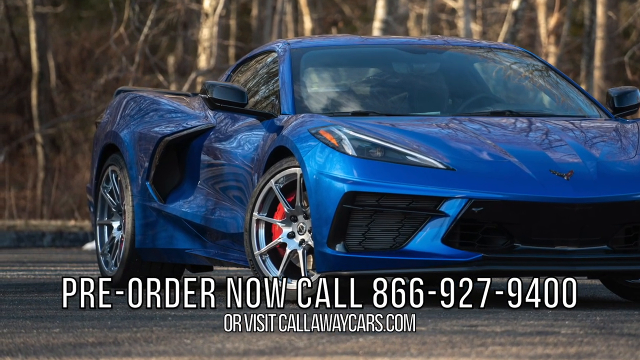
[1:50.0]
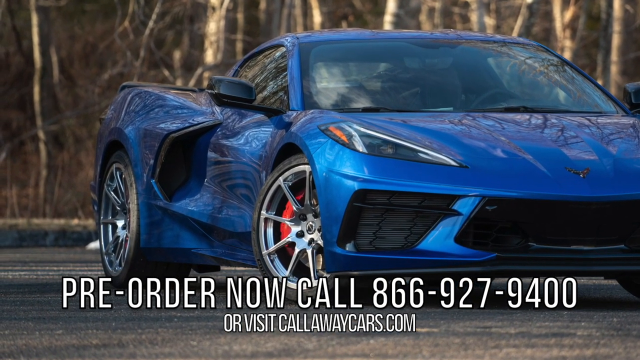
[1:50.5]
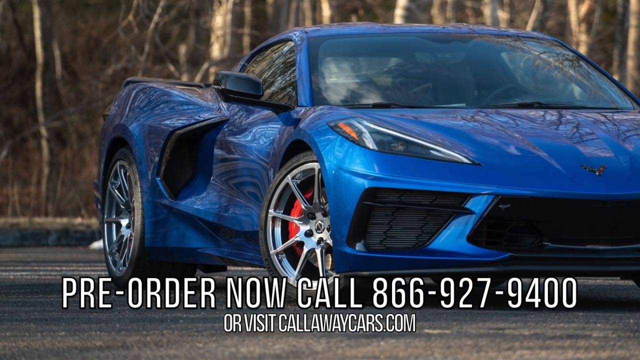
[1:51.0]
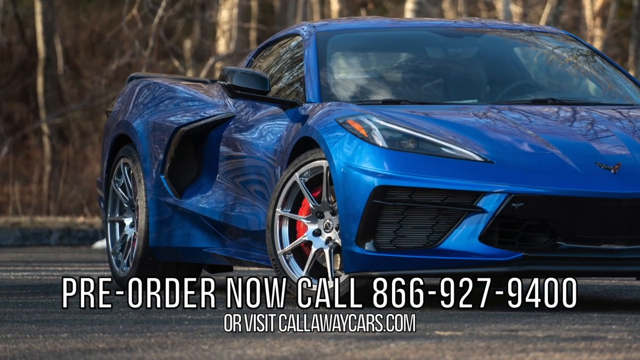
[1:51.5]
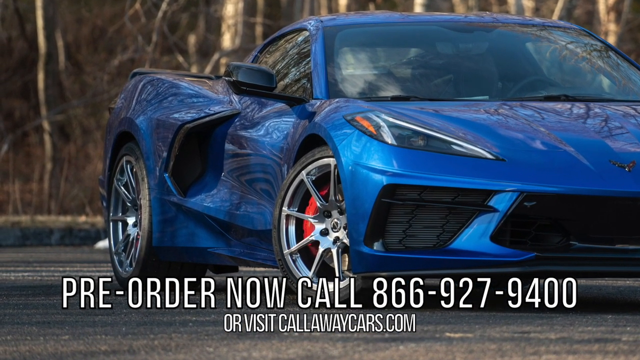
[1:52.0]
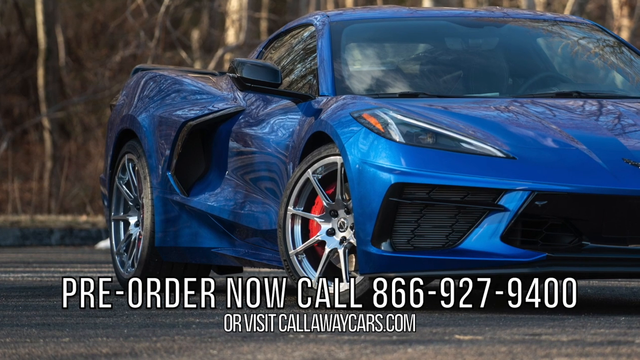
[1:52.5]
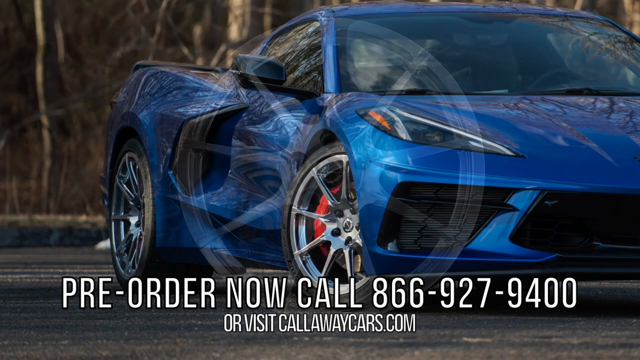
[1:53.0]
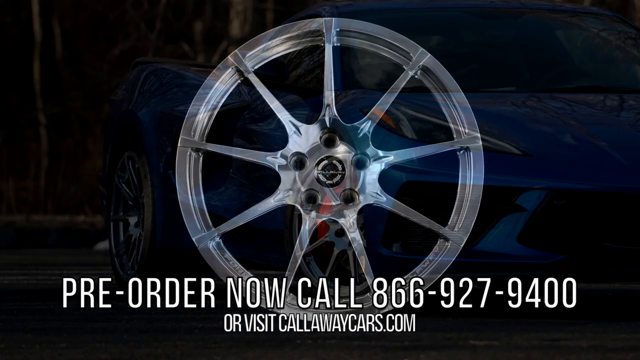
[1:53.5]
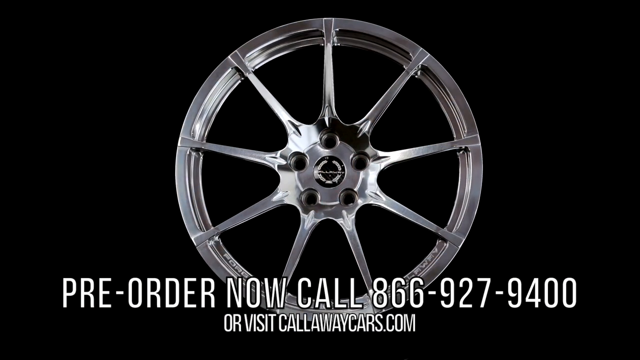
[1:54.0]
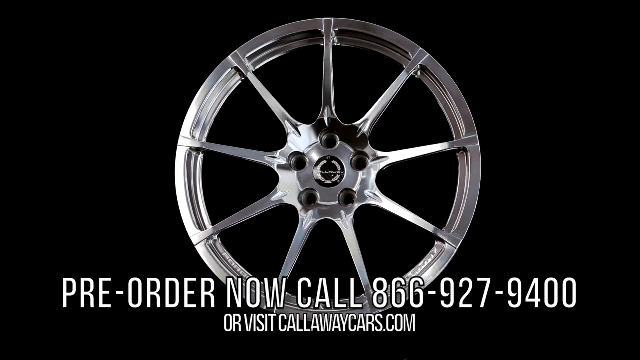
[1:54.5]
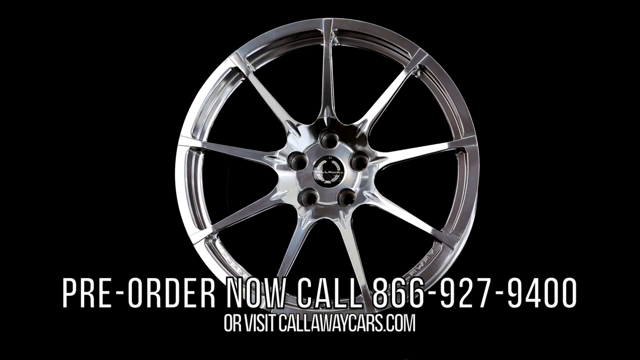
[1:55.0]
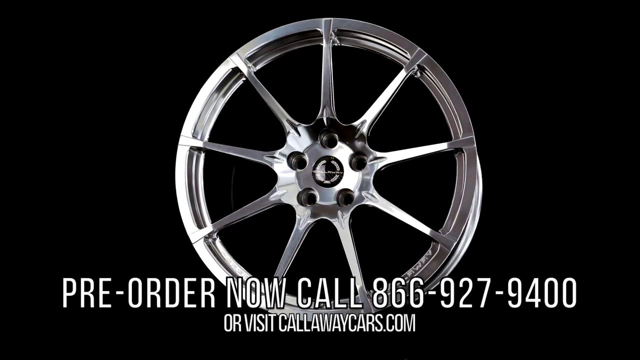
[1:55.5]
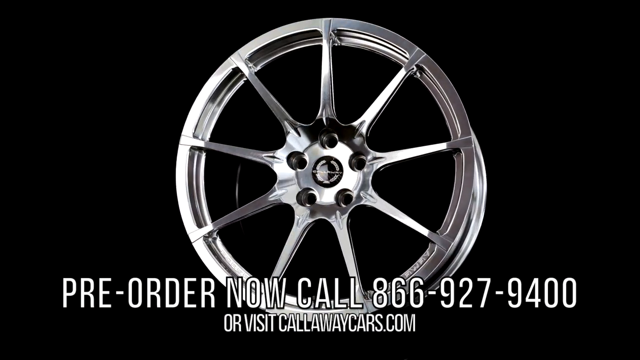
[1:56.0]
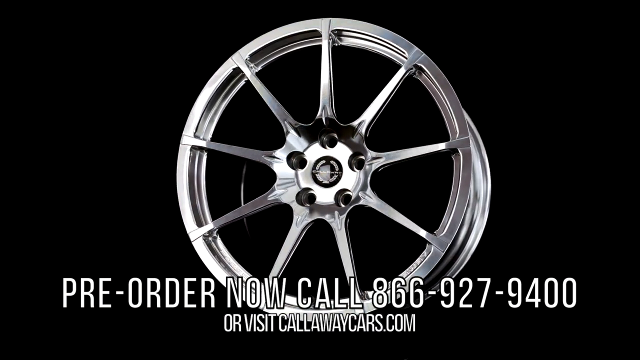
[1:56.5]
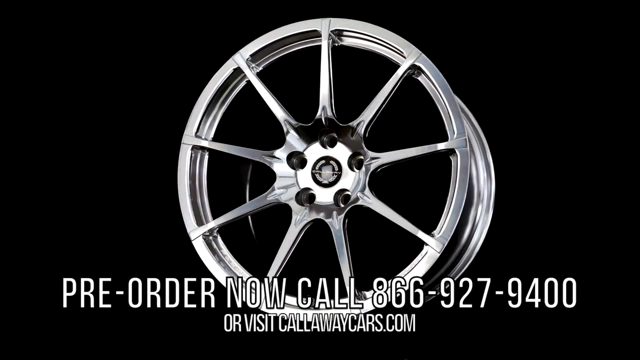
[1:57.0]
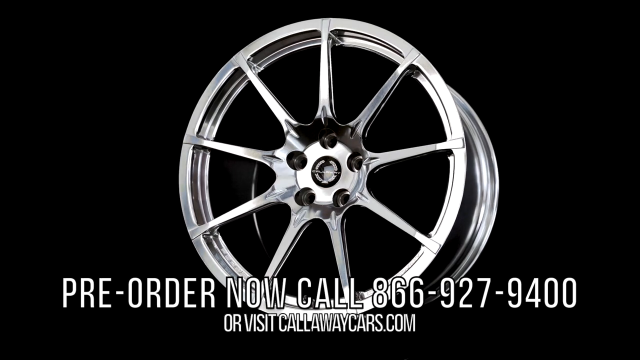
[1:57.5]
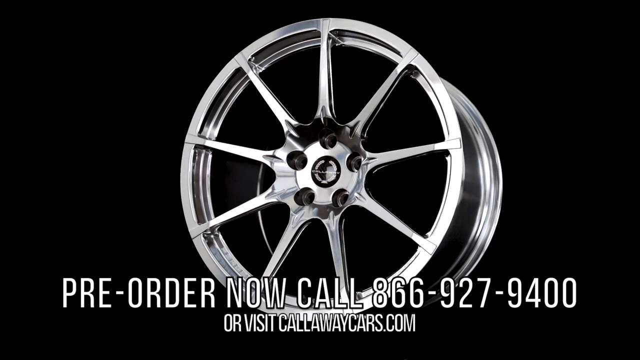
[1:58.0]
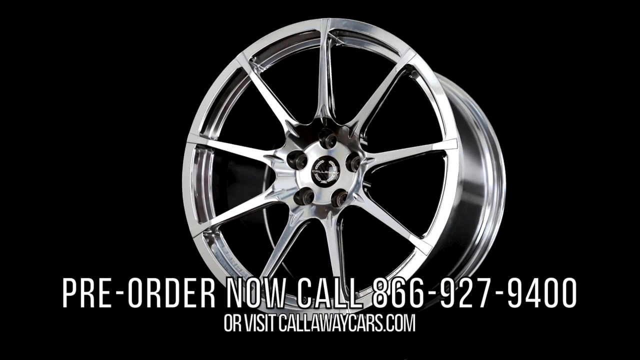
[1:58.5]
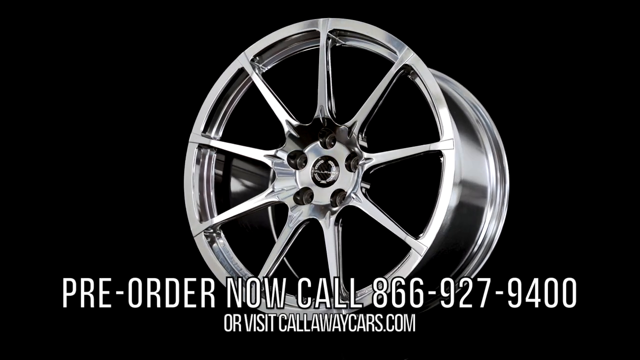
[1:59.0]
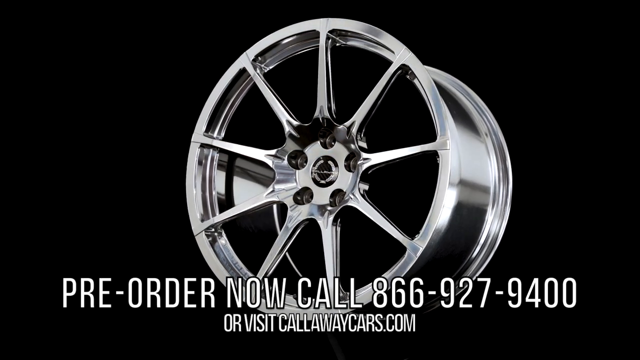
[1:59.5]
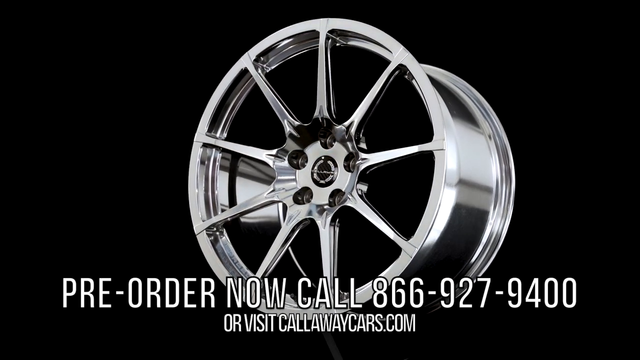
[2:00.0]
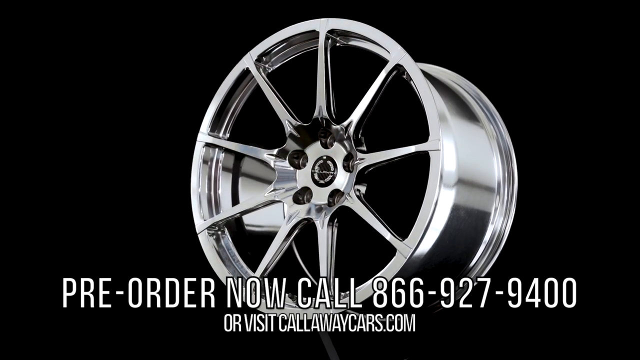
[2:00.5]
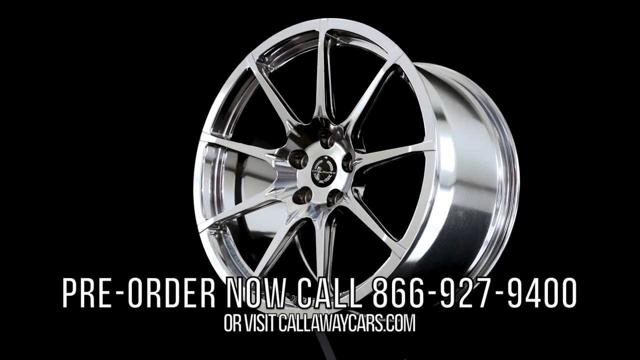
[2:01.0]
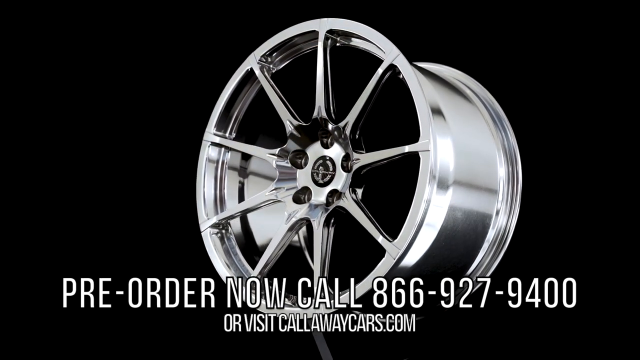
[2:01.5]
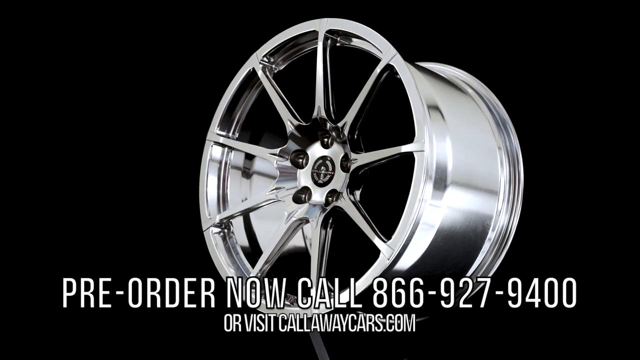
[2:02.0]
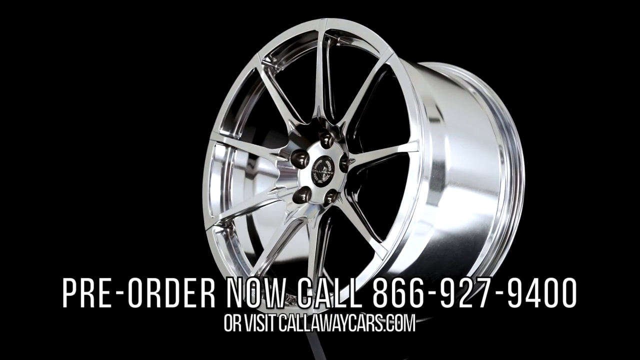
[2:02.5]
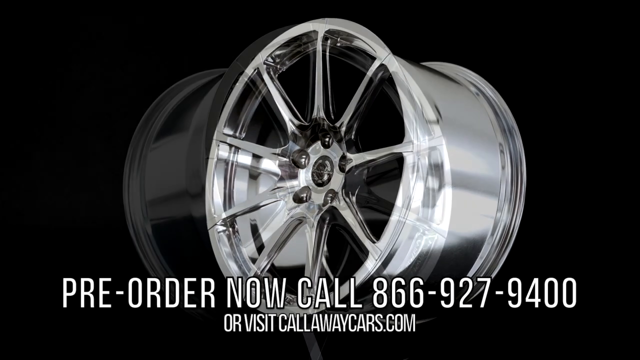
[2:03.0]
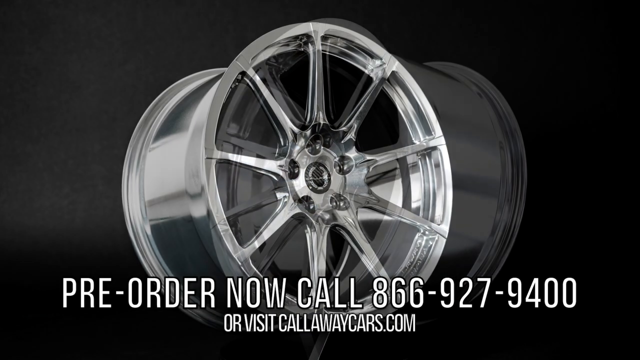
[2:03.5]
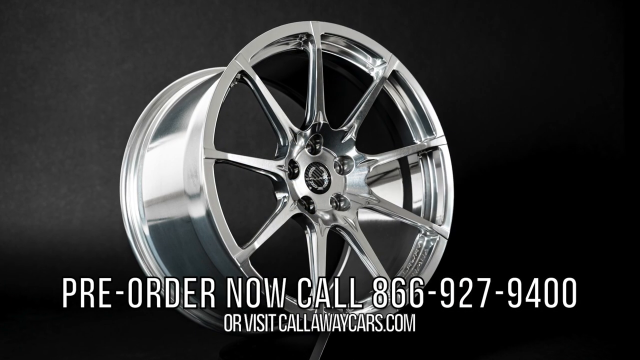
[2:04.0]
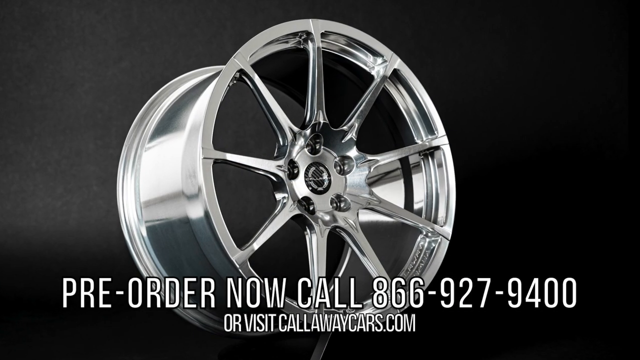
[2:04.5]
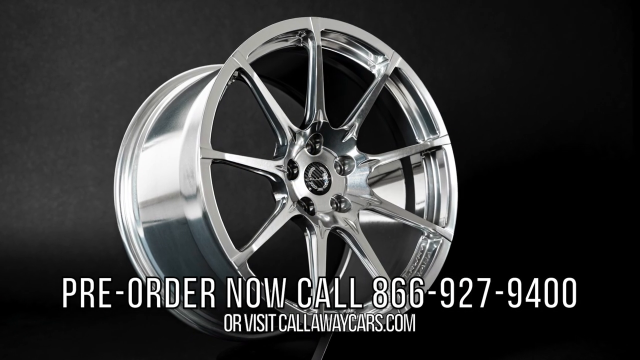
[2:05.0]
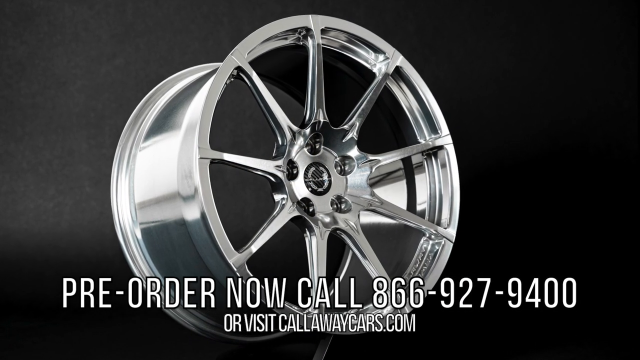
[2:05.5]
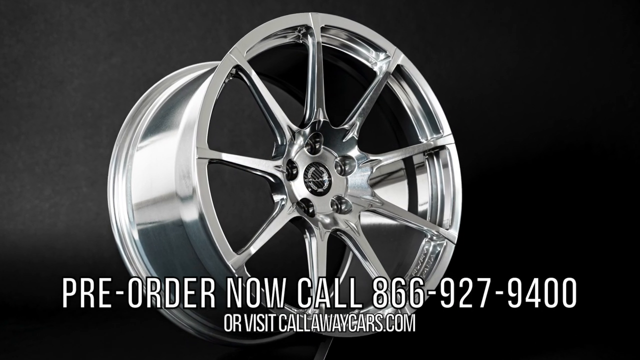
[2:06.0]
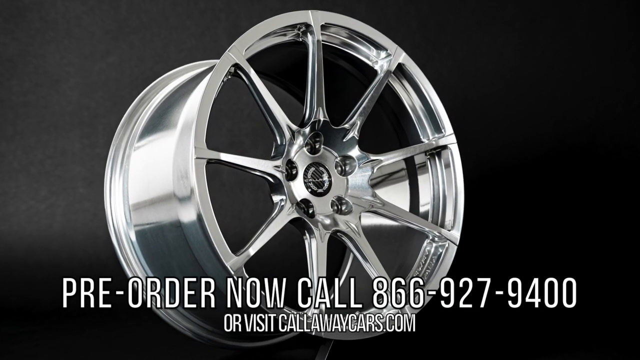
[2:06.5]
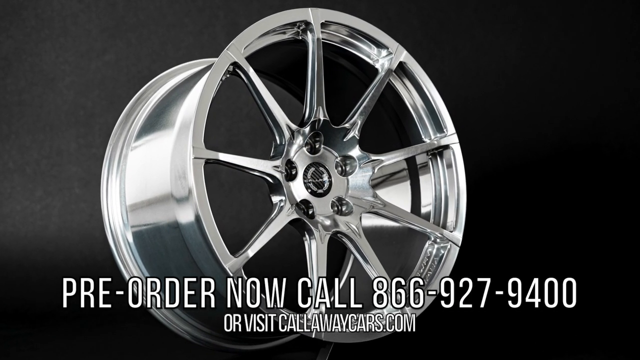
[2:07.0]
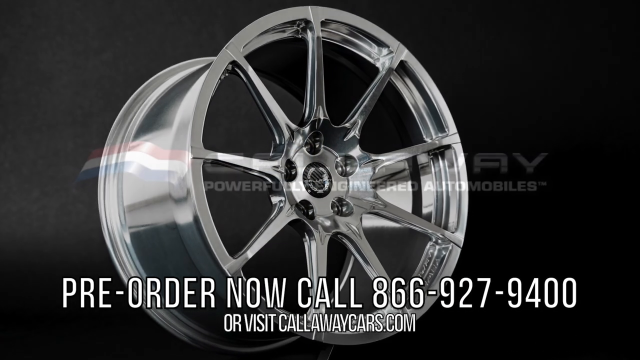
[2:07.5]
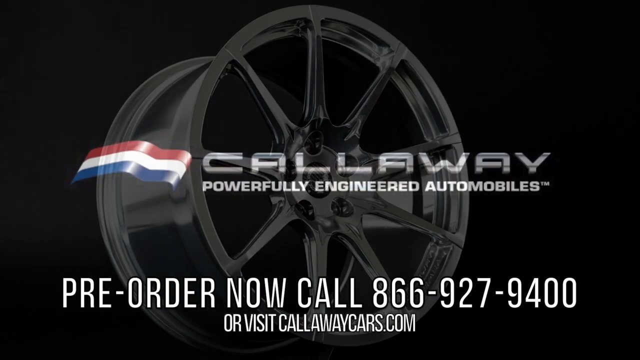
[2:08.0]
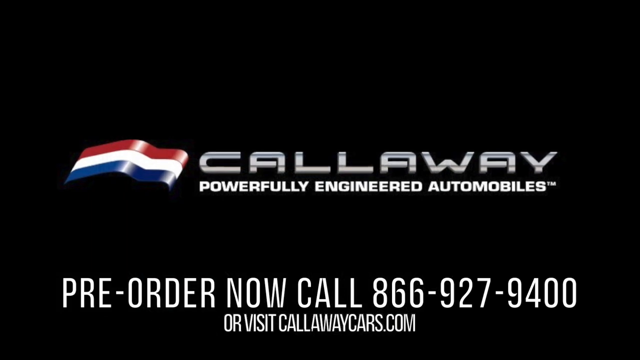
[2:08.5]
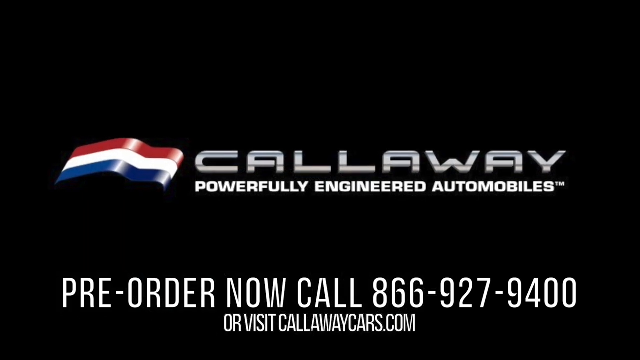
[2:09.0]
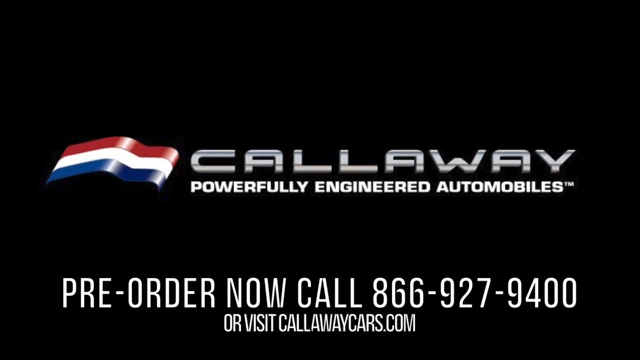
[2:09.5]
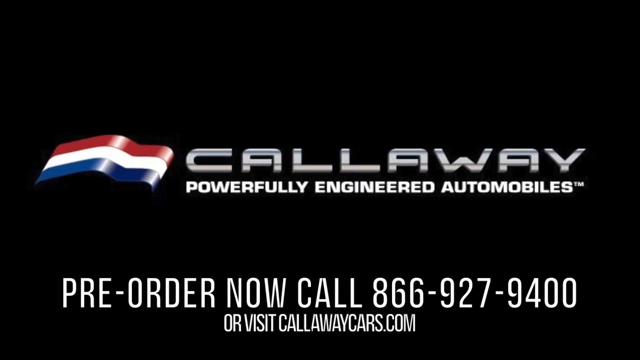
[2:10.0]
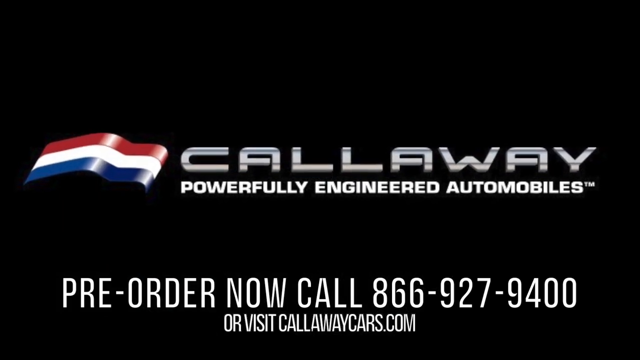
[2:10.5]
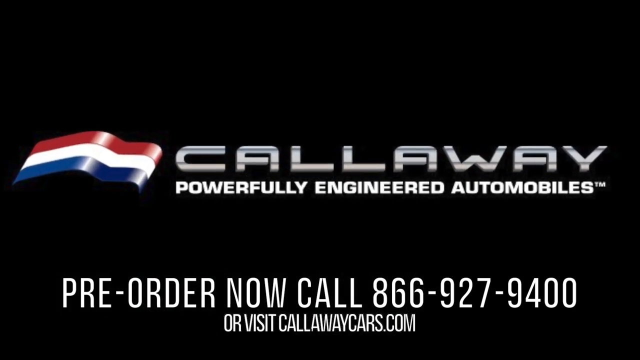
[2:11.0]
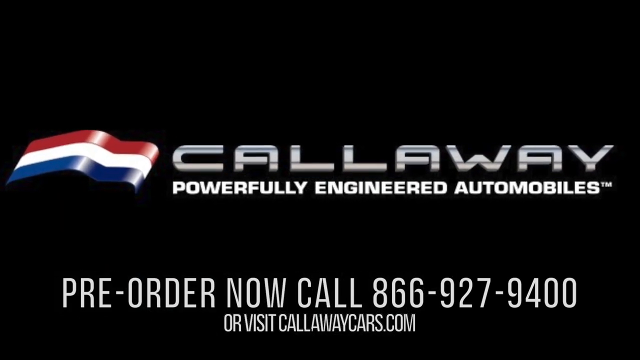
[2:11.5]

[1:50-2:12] Text reads "pre-order now. Call 866-927-9400 or visit callawaycars.com." The blue Corvette is then shown with the rims mounted on it. Next, a rim appears alone, with no tire and not mounted on a car, slowly spinning clockwise, so the view captures the whole rim from its front to its side and the inside area where the tire would be mounted. The video ends with the Callaway logo, a red, white, and blue flag with the red, white, and blue stripes going from top to bottom, and underneath it the text "powerfully engineered automobiles." Across the video, black and silver rims are shown mounted on newer-model Corvettes.